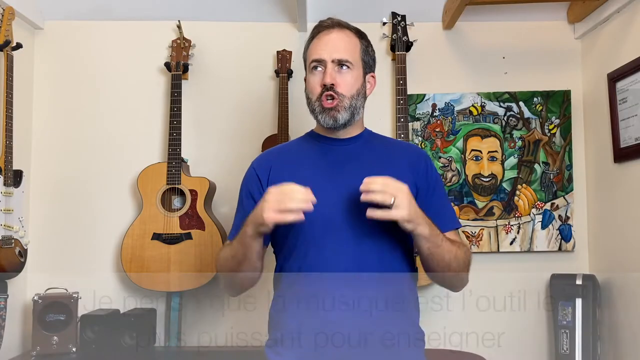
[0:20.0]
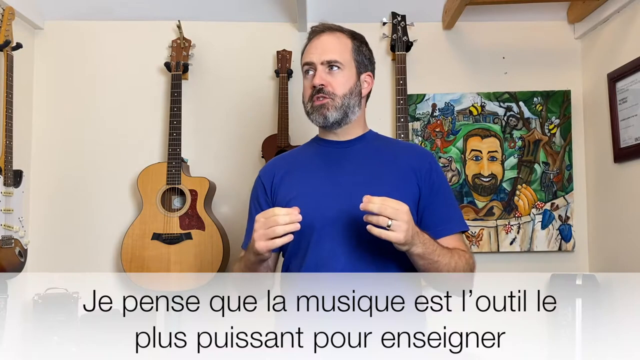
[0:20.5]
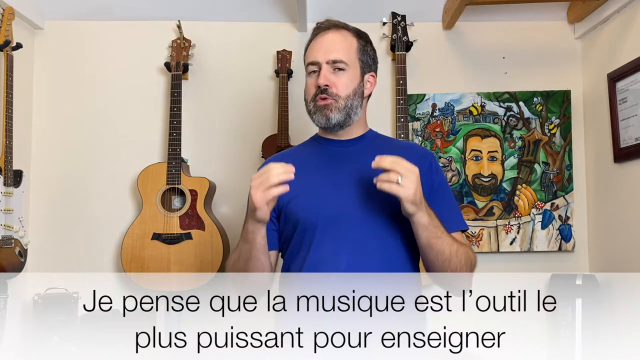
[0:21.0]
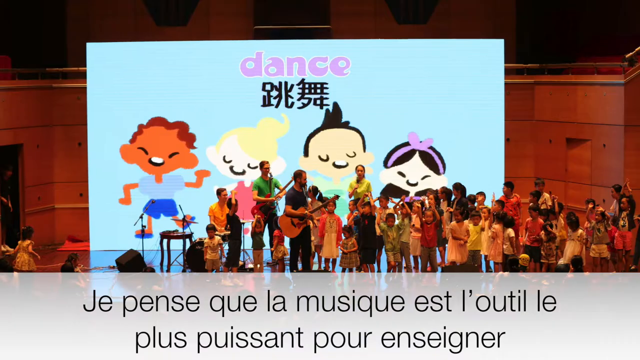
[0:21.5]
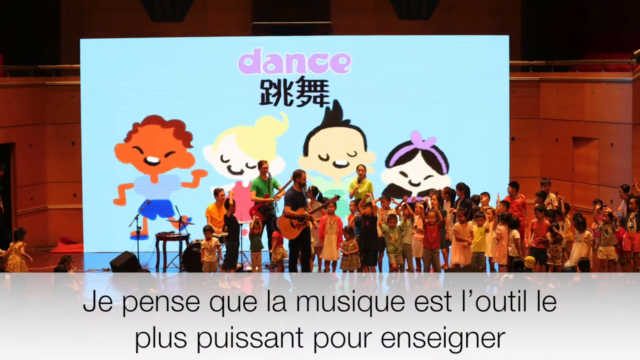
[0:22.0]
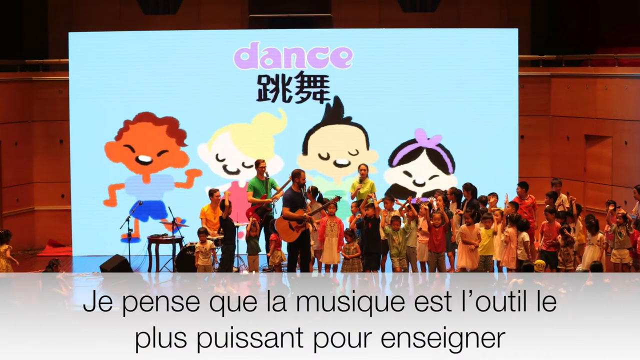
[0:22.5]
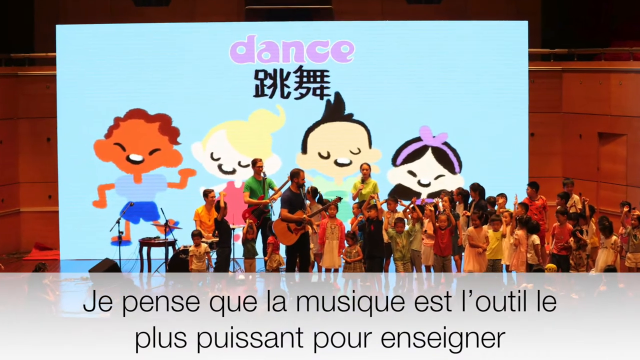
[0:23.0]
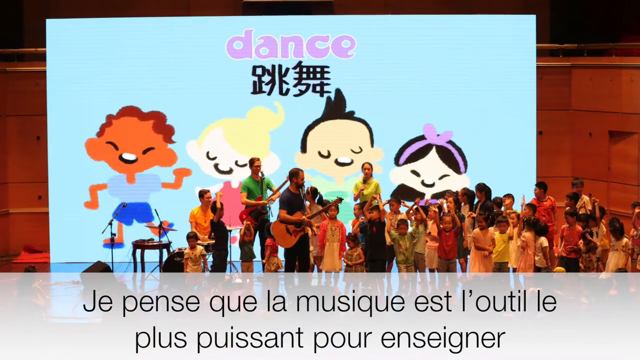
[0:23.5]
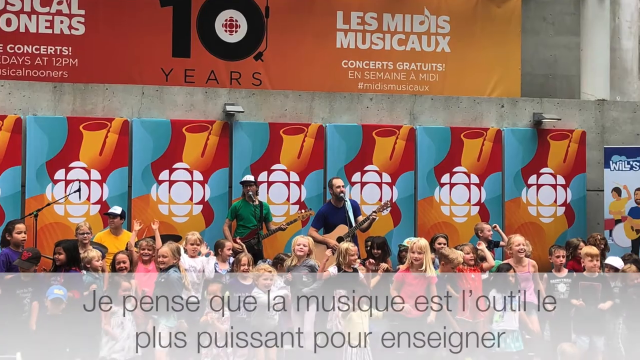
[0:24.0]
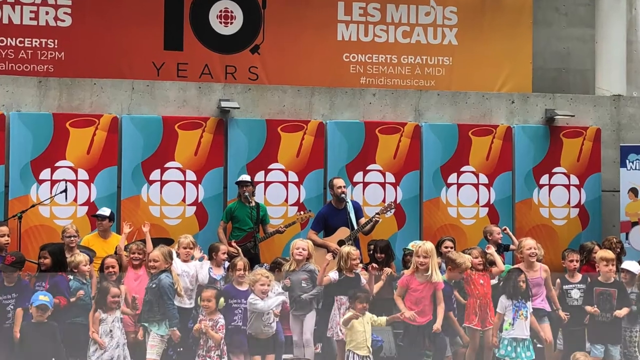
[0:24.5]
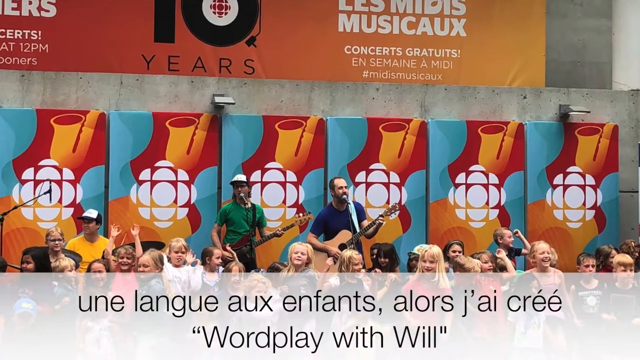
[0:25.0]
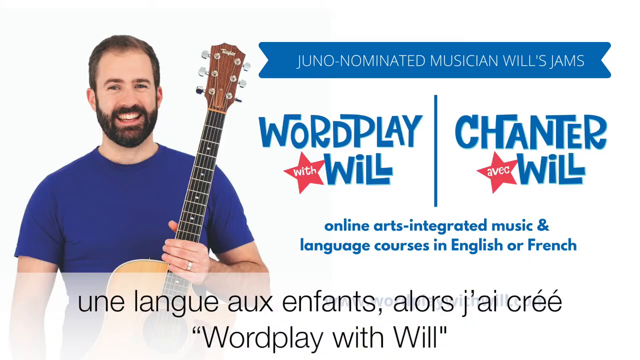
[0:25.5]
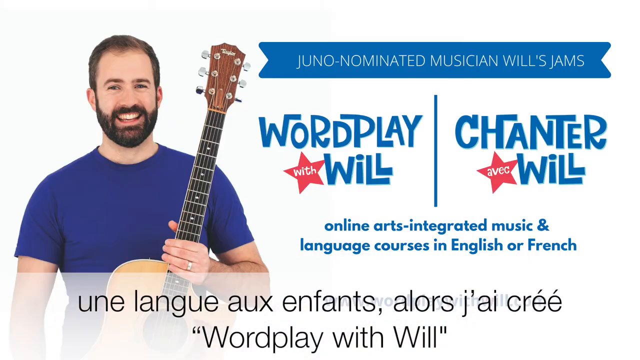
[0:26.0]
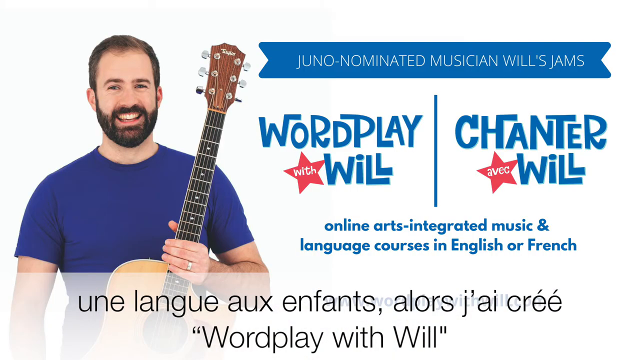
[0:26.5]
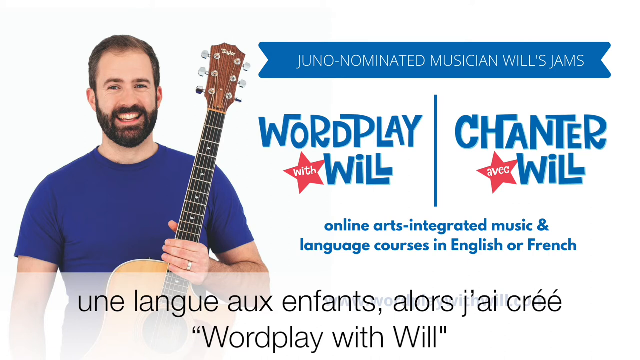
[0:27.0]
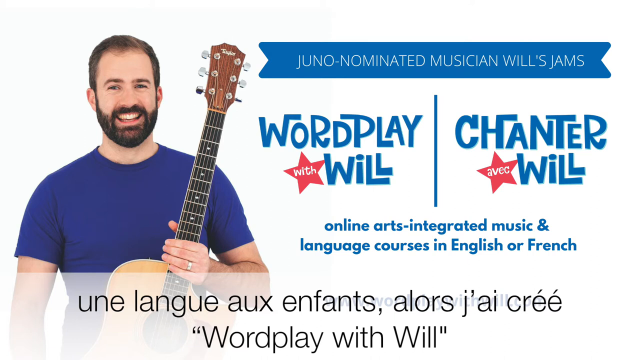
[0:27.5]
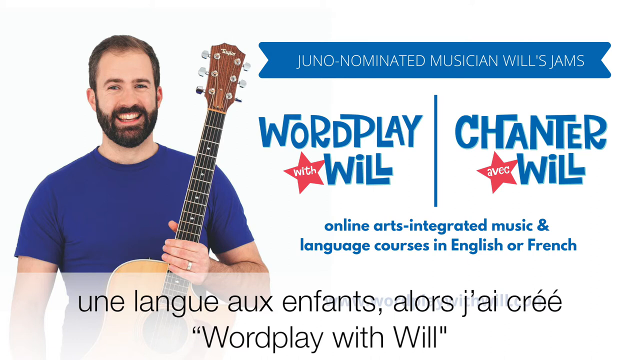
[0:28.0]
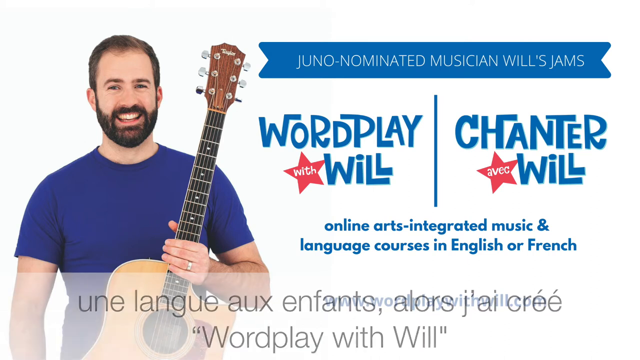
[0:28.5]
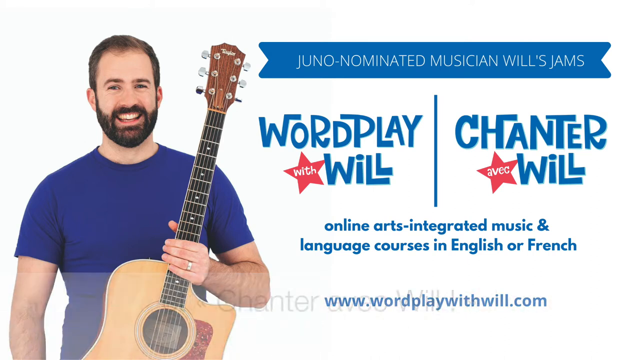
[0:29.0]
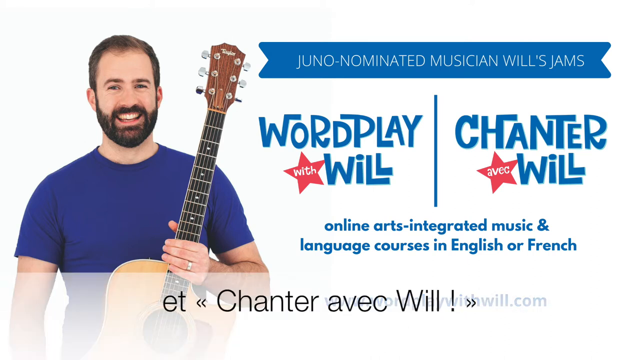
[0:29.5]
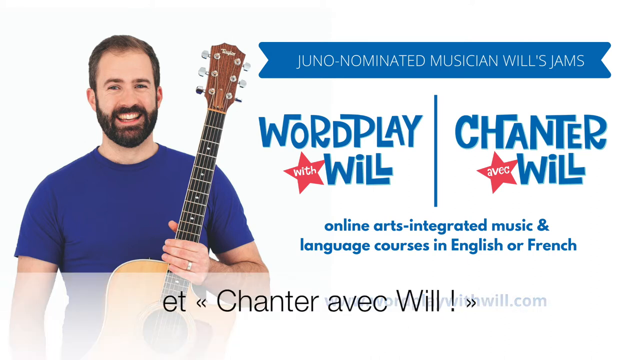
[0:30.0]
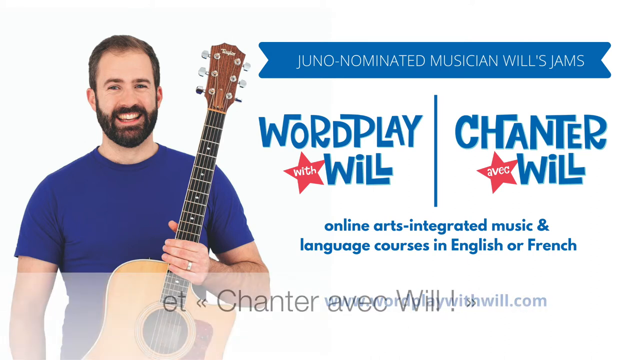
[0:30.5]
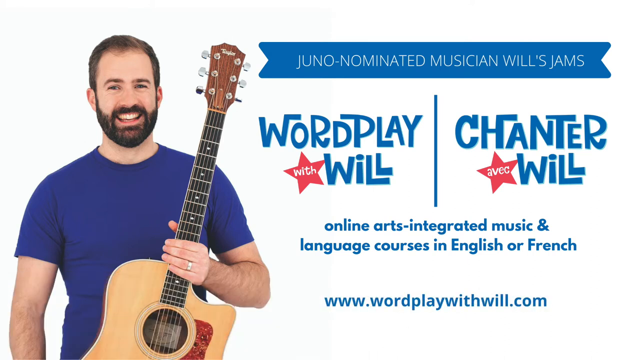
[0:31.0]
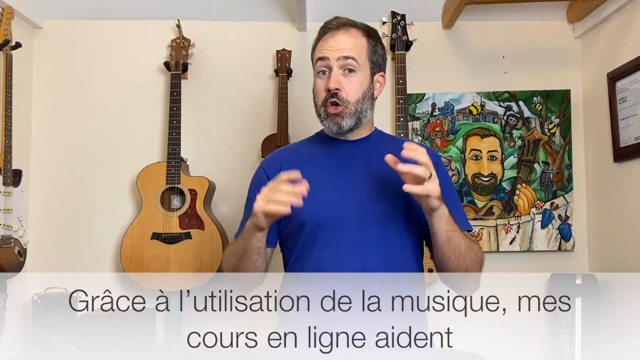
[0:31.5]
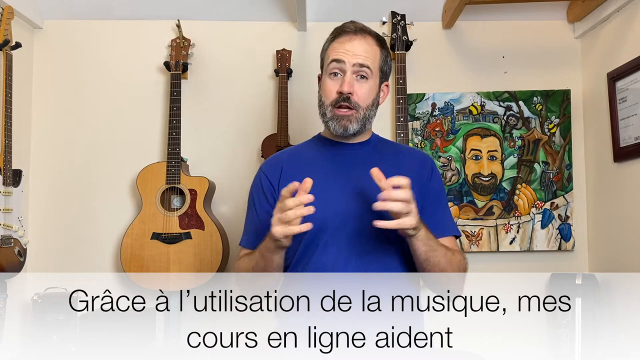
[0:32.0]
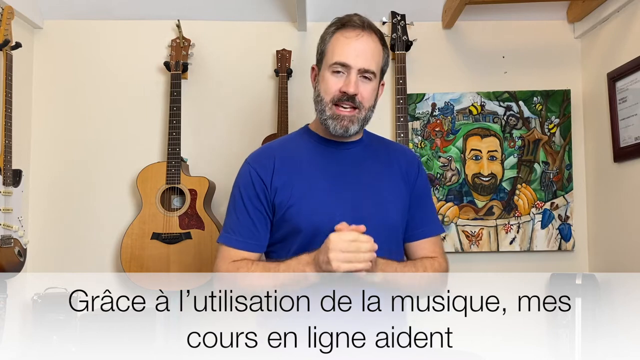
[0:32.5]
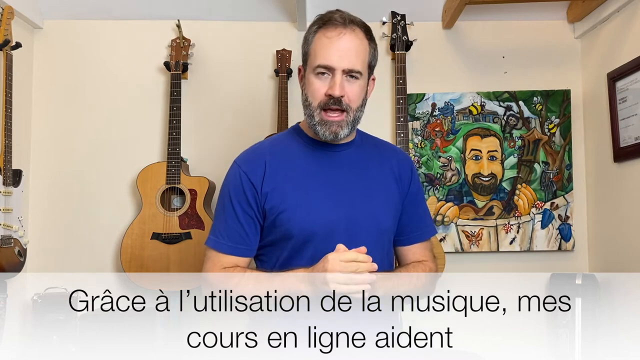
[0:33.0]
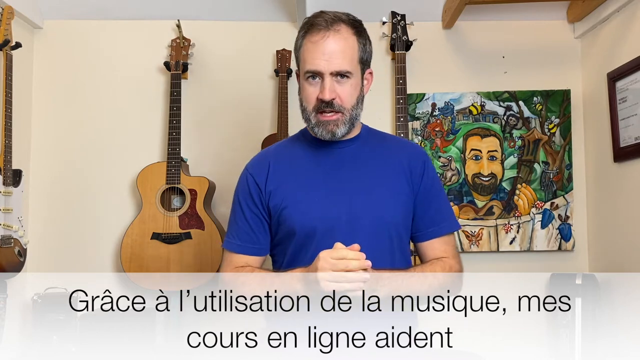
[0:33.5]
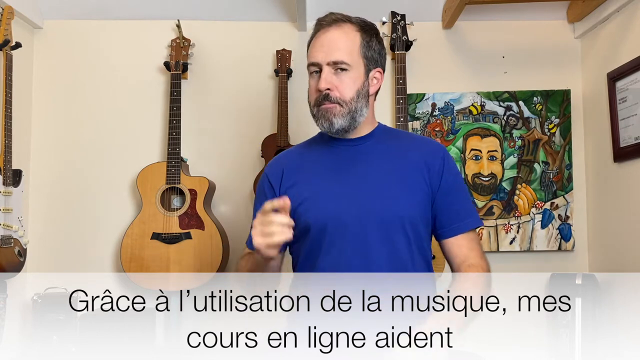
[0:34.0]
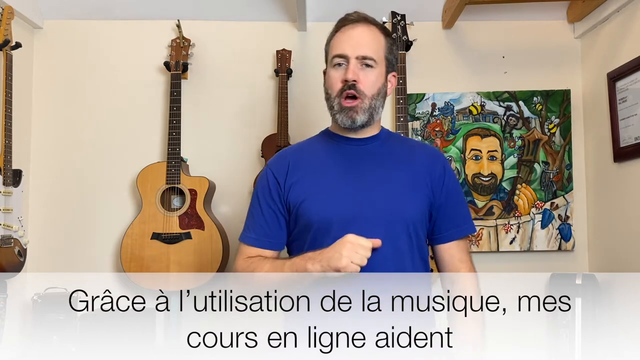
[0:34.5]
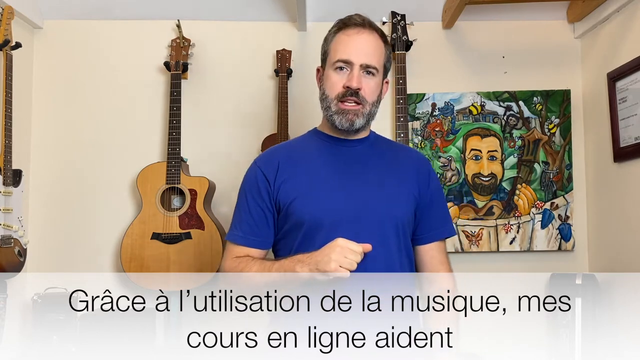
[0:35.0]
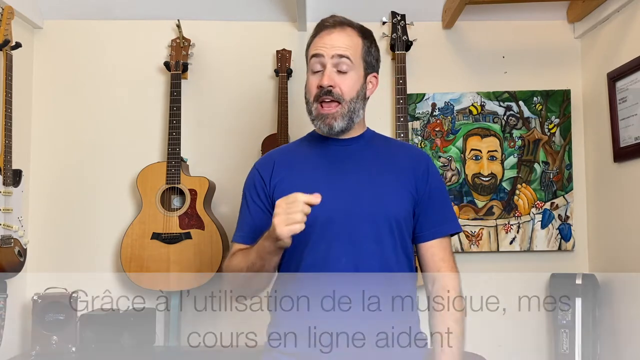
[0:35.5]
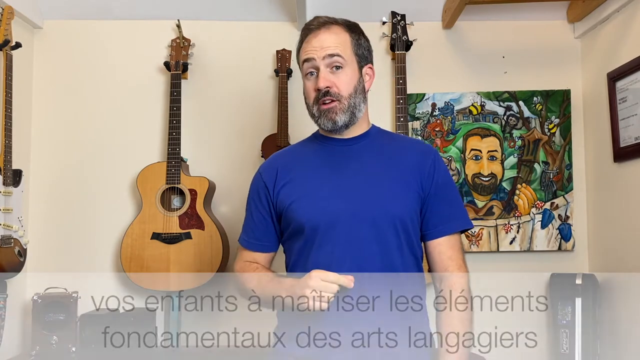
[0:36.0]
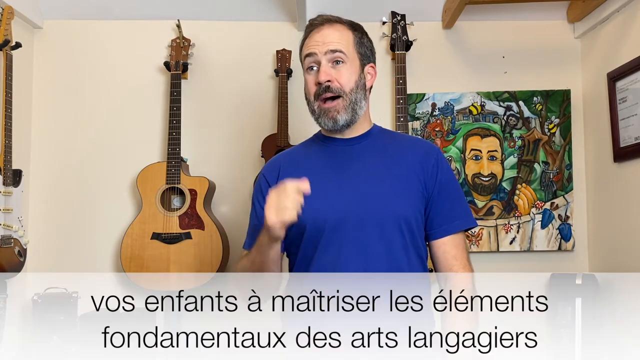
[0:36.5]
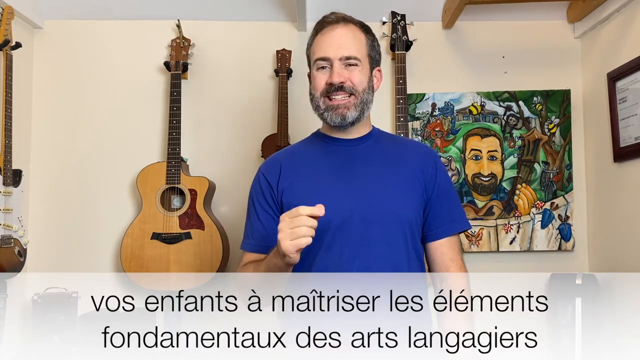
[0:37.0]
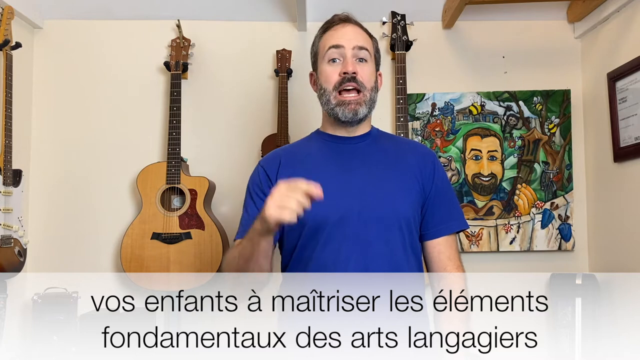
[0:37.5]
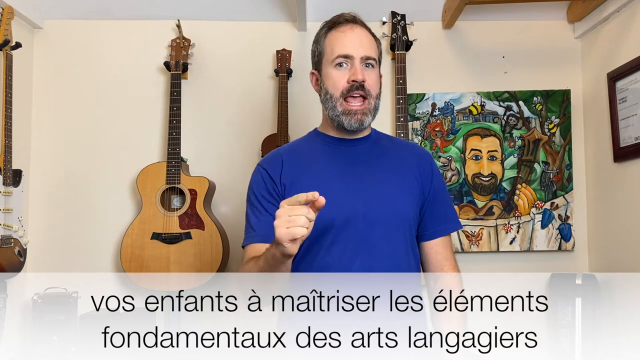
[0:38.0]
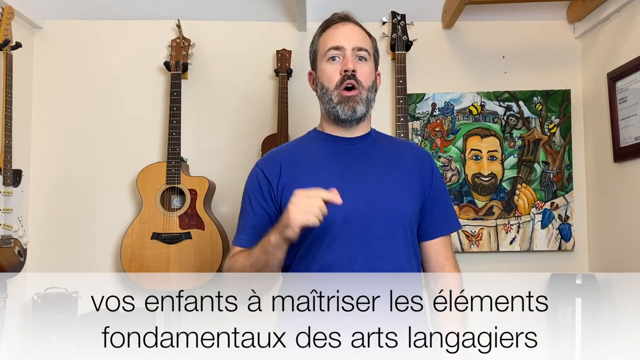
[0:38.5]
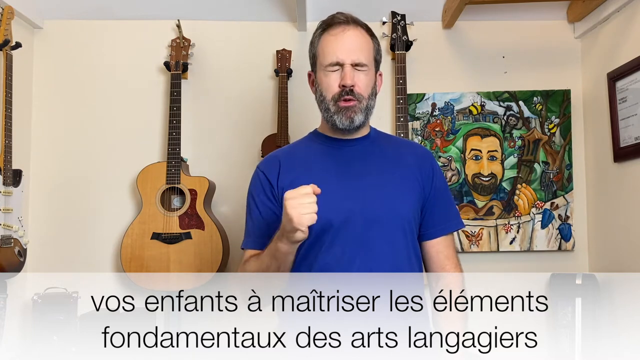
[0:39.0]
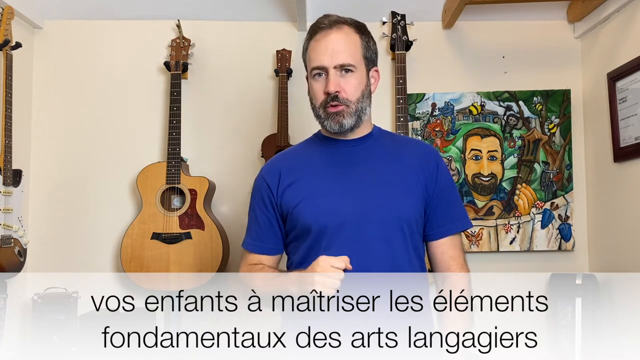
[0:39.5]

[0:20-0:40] A Caucasian man is in the center of the frame. He has dark hair and a beard with a mixture of gray in it, wears a blue short-sleeved t-shirt, and has a wedding ring on his left ring finger. Behind him is a white wall; three walls are visible, one directly behind him and two slightly to the sides, so he appears to be in a really small room. Guitars hang on the wall behind him: one is a yellow acoustic guitar with brown trim, and of the other two, on the right behind him, only the bridges are visible. On the back wall is an illustrated or cartoonish-looking painting of this man. The man talks to the camera or to someone off camera. The scene then changes to a stage in a larger building, where the same man is playing or holding his guitar, surrounded by a group of children and a few other adults.